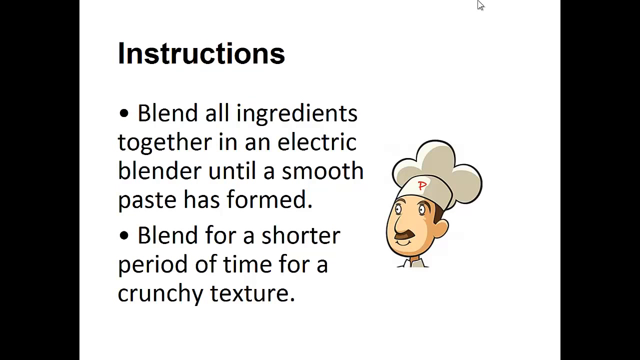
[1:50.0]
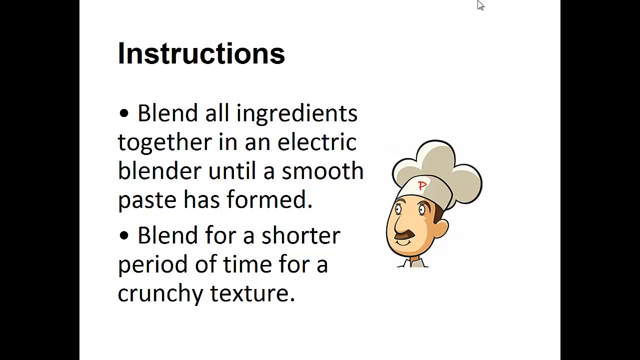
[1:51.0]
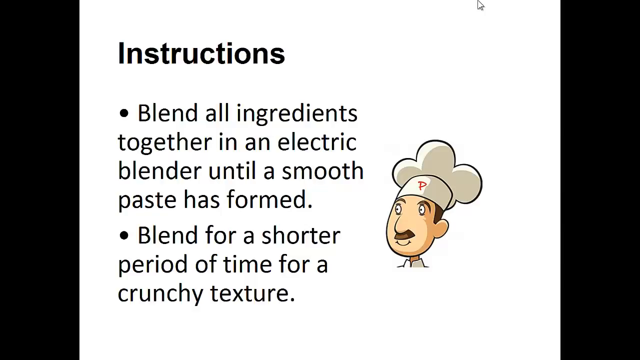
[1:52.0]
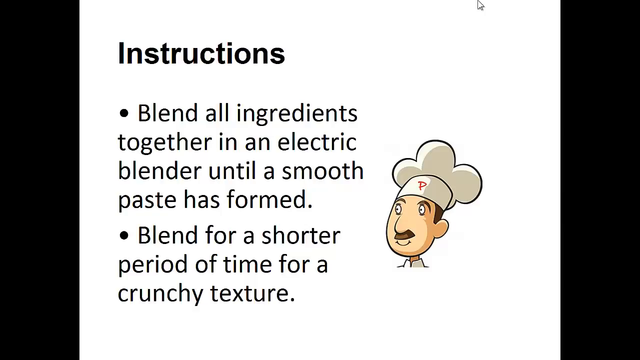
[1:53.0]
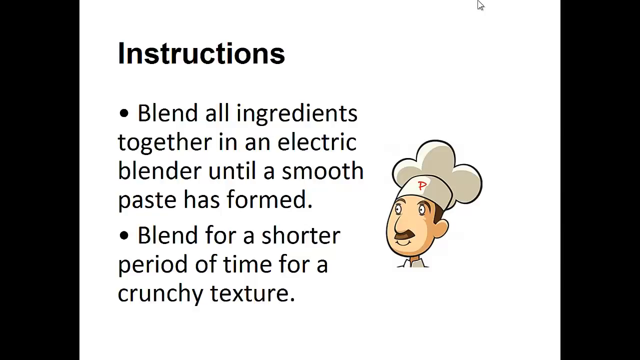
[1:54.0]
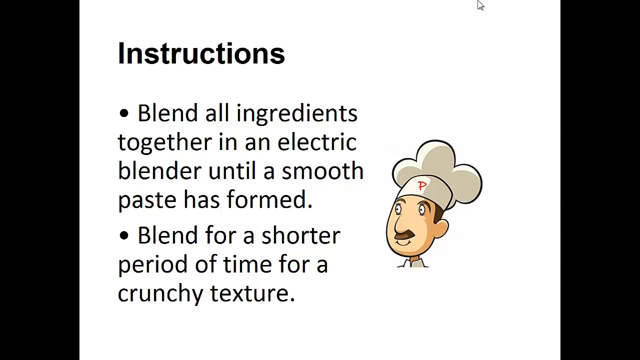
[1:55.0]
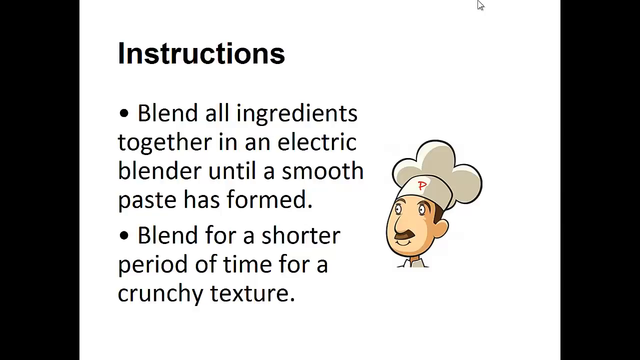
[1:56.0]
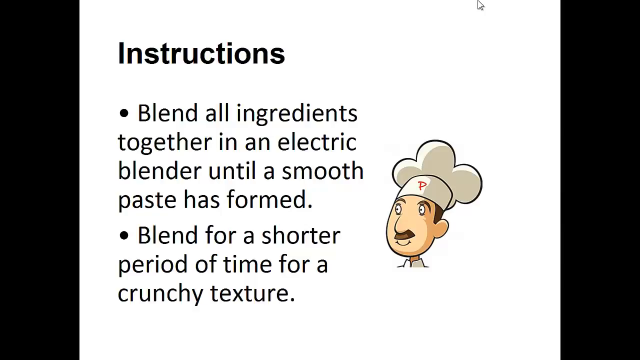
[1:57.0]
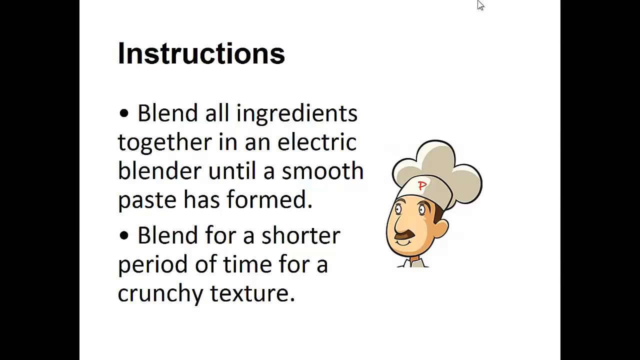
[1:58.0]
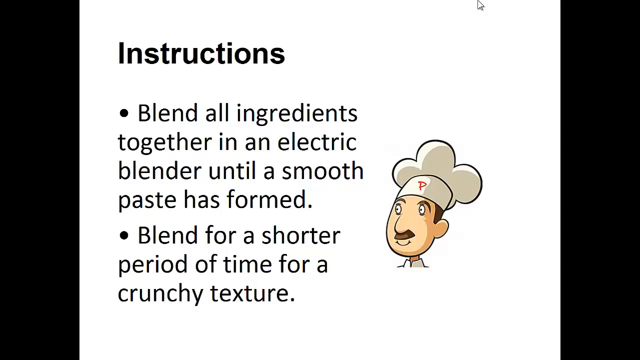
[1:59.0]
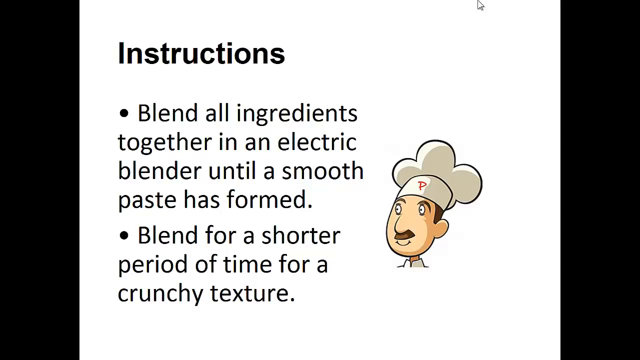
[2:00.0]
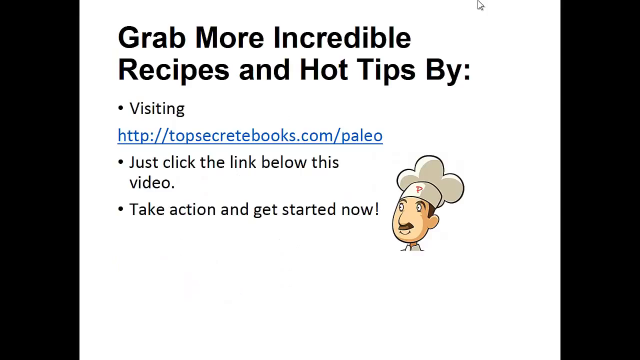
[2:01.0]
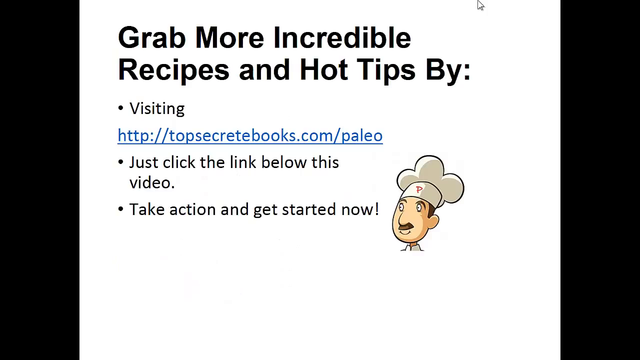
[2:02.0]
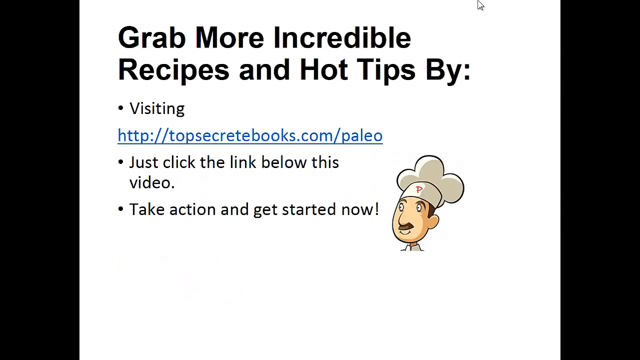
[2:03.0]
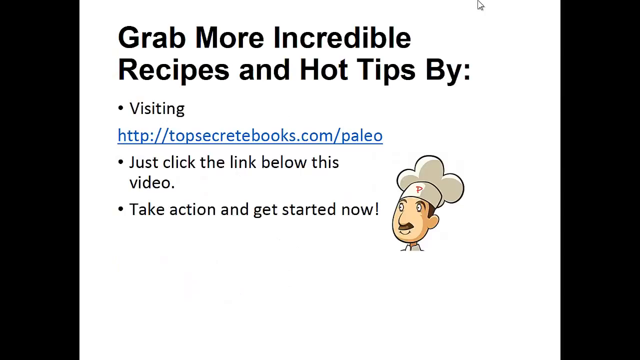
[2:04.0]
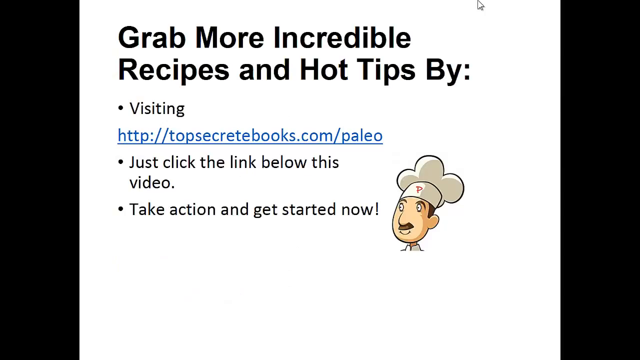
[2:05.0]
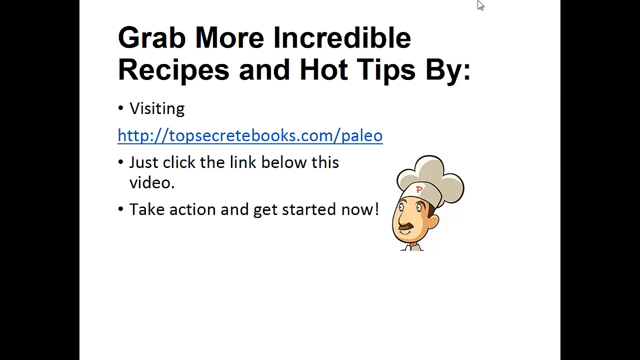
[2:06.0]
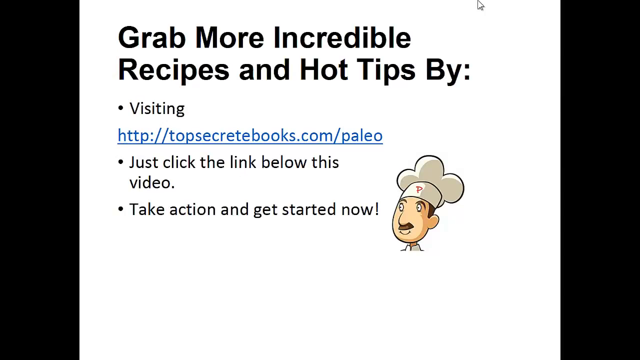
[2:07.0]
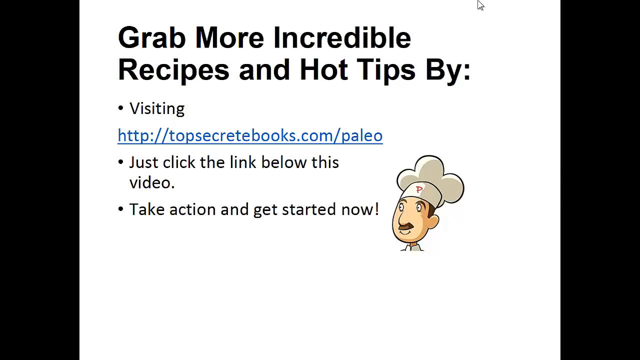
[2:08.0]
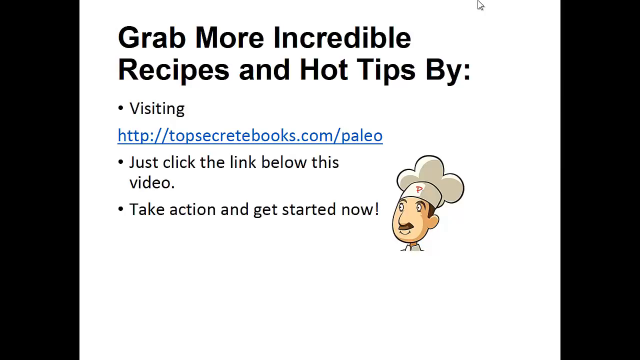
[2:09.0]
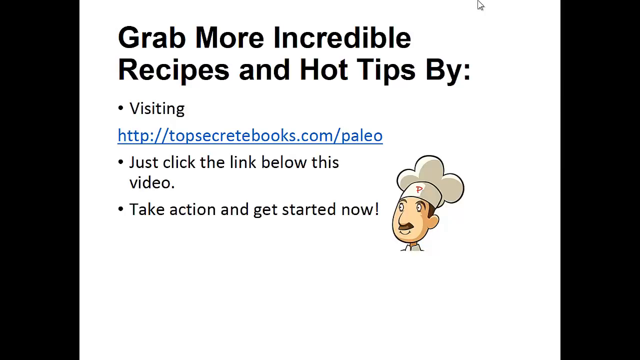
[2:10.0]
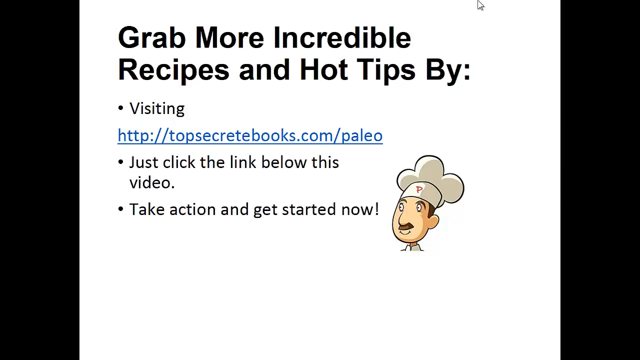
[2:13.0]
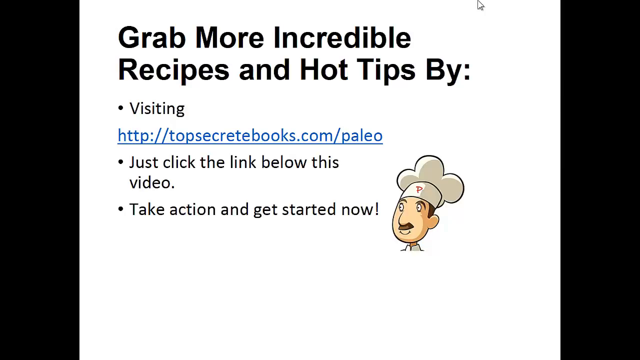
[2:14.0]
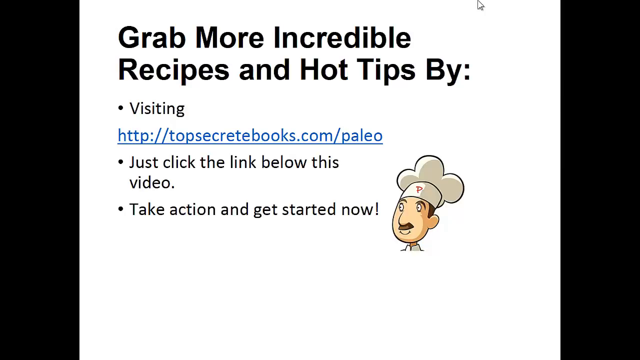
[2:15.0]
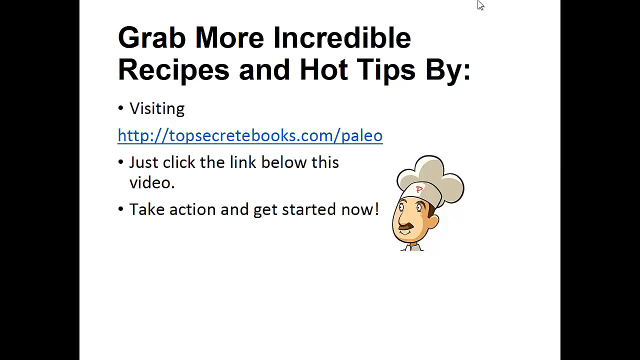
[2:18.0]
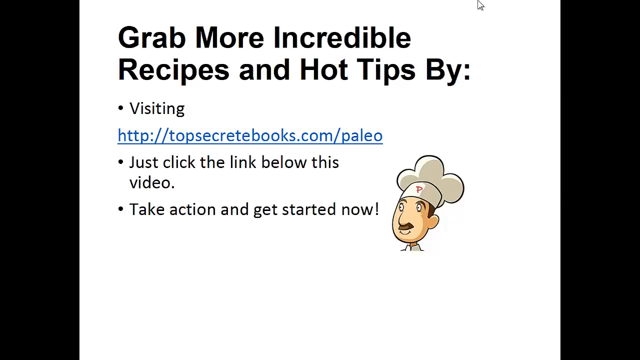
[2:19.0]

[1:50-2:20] A screen titled "Instructions" appears on a white background. It shows two bullet points: "blend all the ingredients together in an electric blender until a smooth paste is formed" and "blend for a shorter period of time for a crunchy texture." A cartoon chef wearing a chef hat with a red letter P on it is also shown. Another screen follows, titled "Grab more incredible recipes and options by," with bullet points about visiting a link, topsecretbooks.com, and "just click the link below this video," along with "take action and get started now." This last page, on a white background, stays for about the last 10 seconds until the video ends.